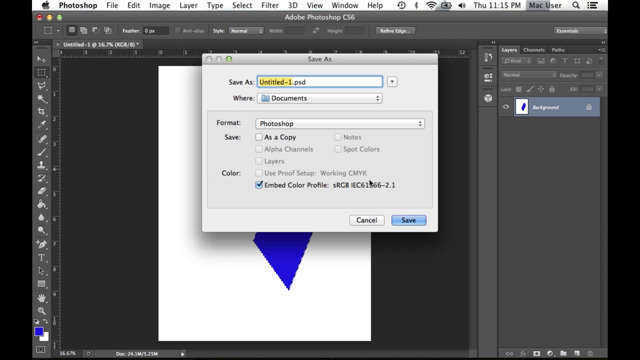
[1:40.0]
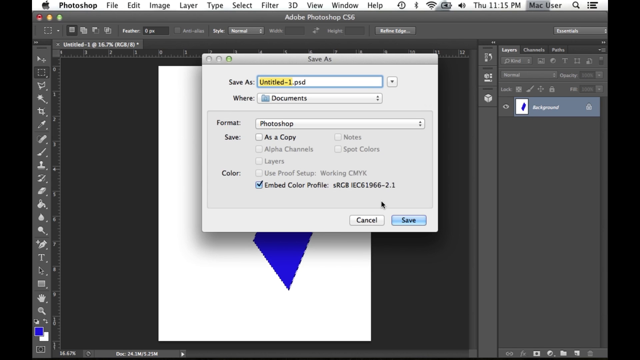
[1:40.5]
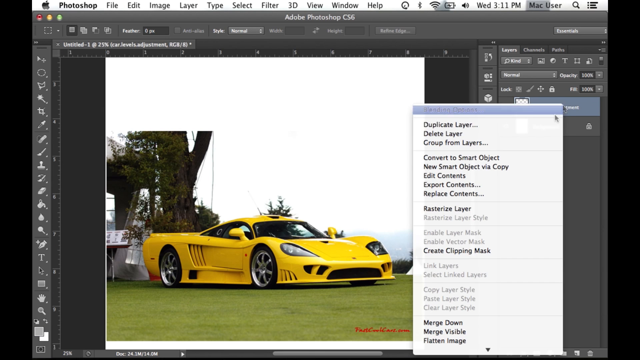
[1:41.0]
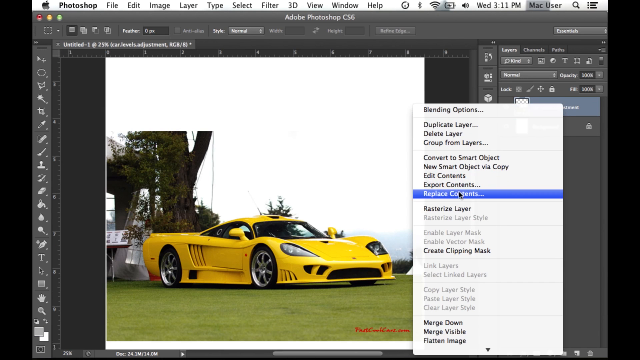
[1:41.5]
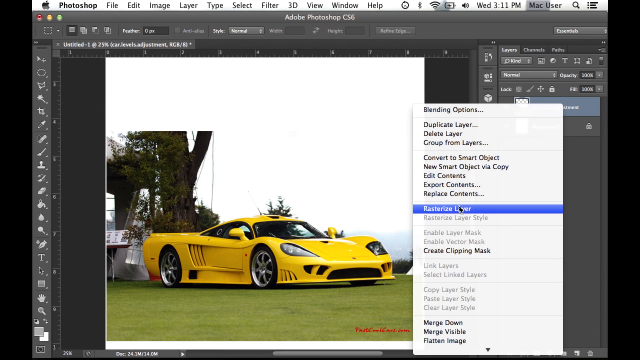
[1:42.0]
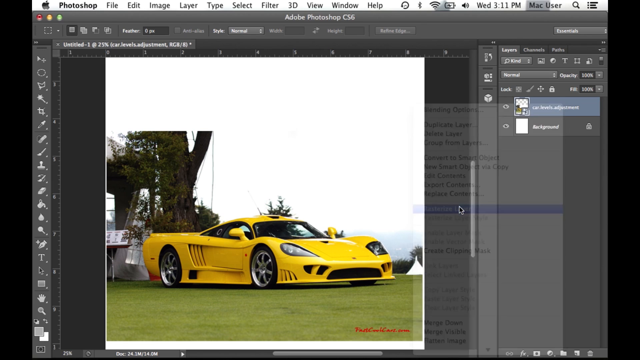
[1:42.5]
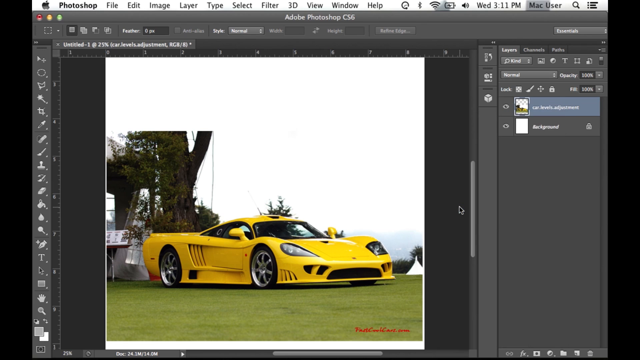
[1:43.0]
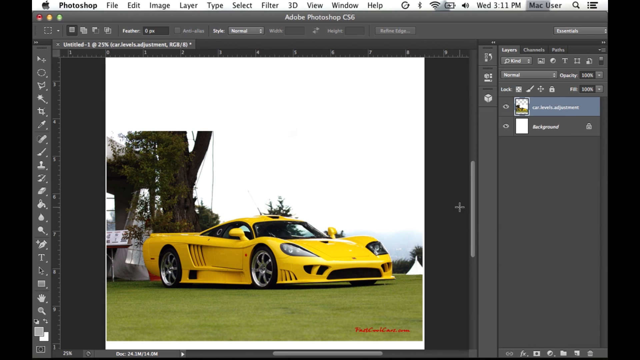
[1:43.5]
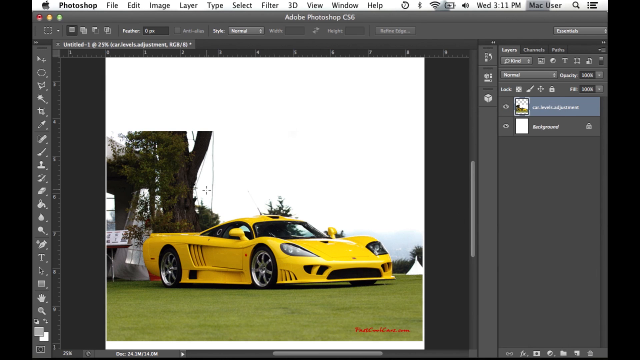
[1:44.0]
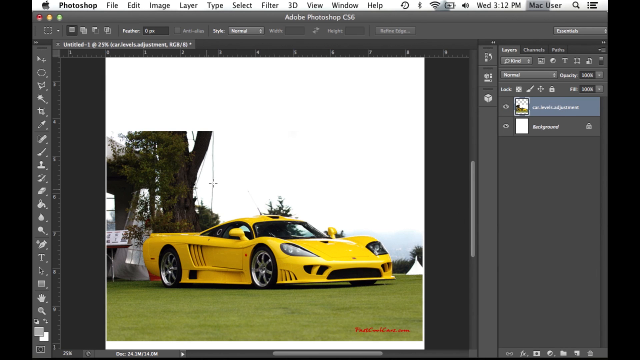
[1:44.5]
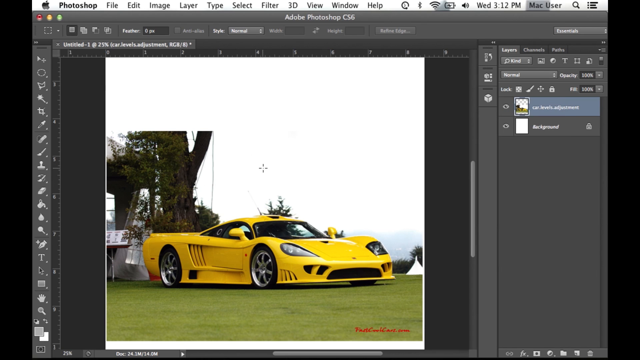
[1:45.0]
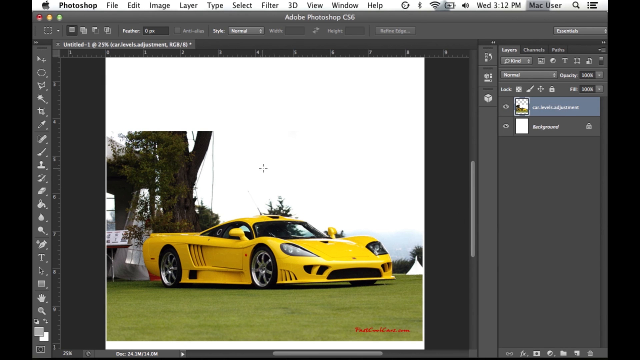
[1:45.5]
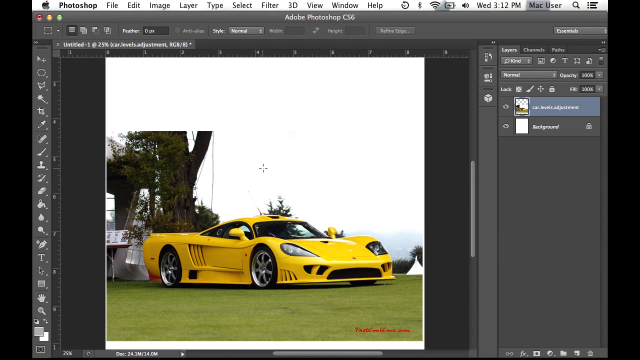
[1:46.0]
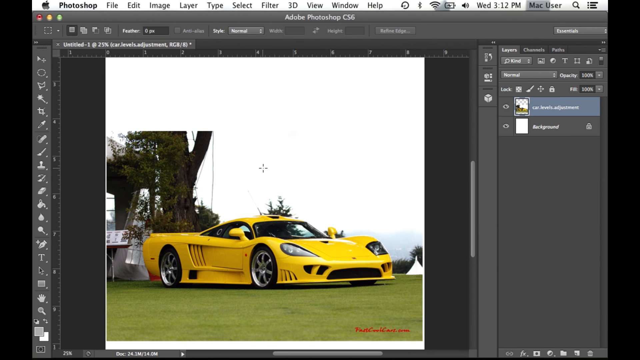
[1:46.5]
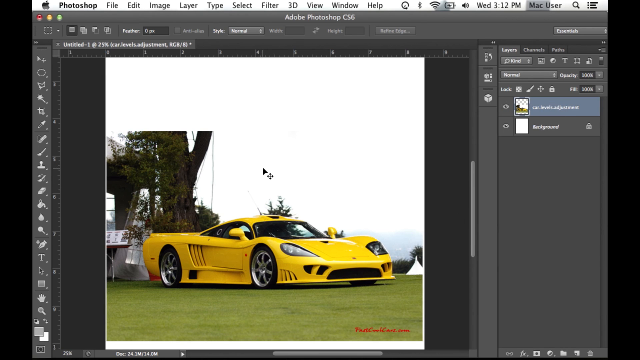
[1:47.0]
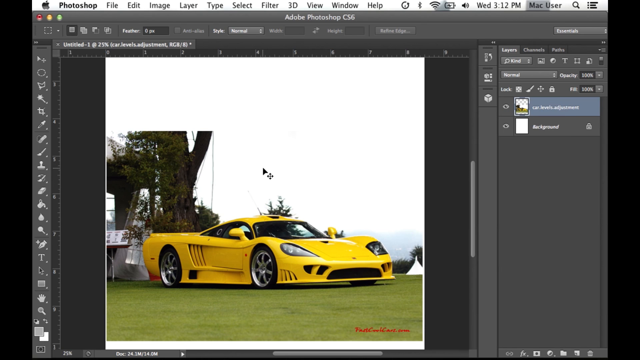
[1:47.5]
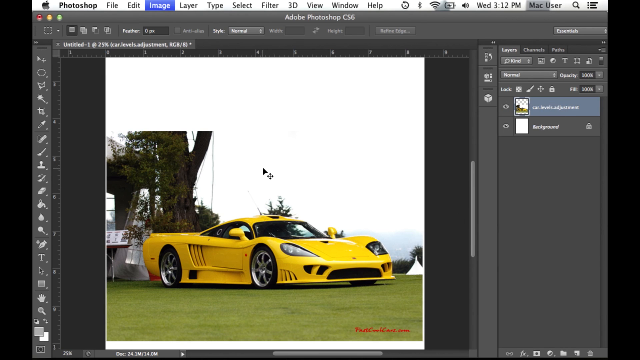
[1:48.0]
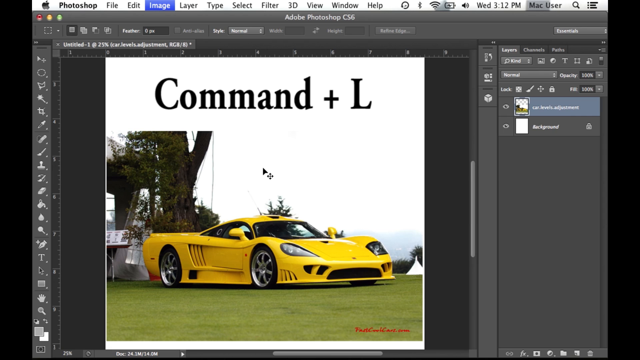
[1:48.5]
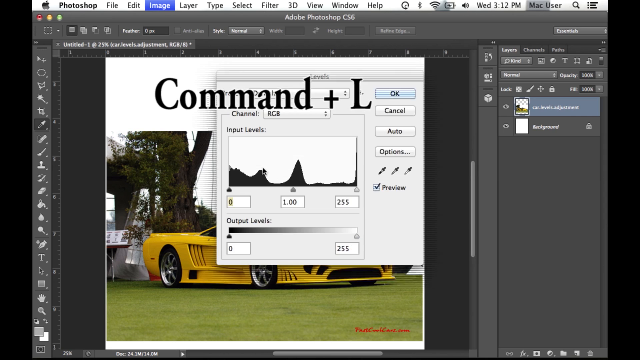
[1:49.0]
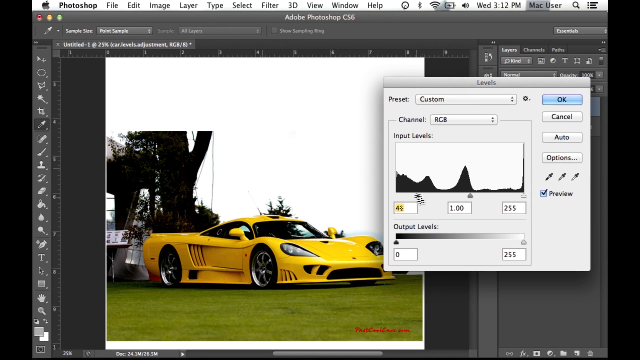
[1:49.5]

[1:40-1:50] The video is a little wider than it is tall, with black letterboxing about five percent in from each side. It shows Photoshop on a Mac desktop, identified by the Apple in the upper left, then "Photoshop", then the menu: file, edit, image, layer, type, select, filter, 3D, view, window and help. The tools run down the left-hand edge as usual. At the top it says "Adobe Photoshop CS6". The main work area shows what looks like a yellow Lamborghini facing somewhere around 4:30 or 5 o'clock, with its front right corner pointing toward the viewer. It is sitting in a grassy area with a tree just behind it on the left. A menu is open on the right, and advance layer is clicked. As this goes on, text comes over the top reading "command plus L".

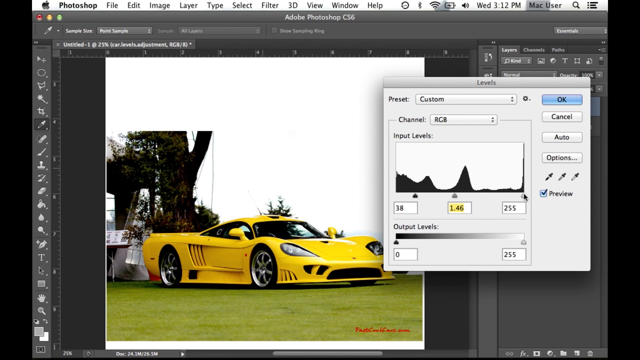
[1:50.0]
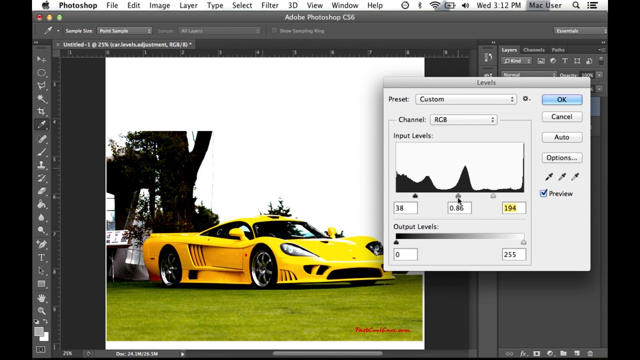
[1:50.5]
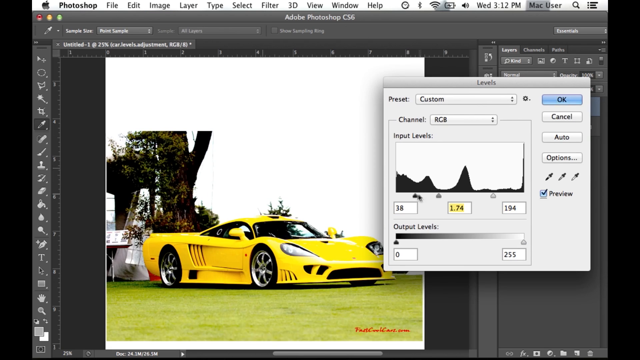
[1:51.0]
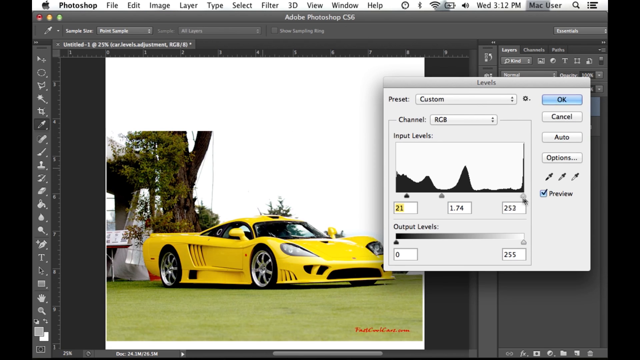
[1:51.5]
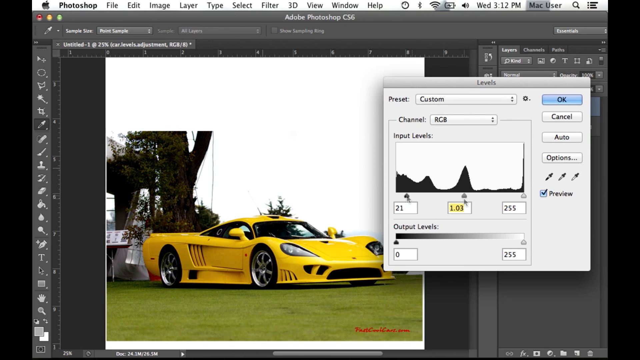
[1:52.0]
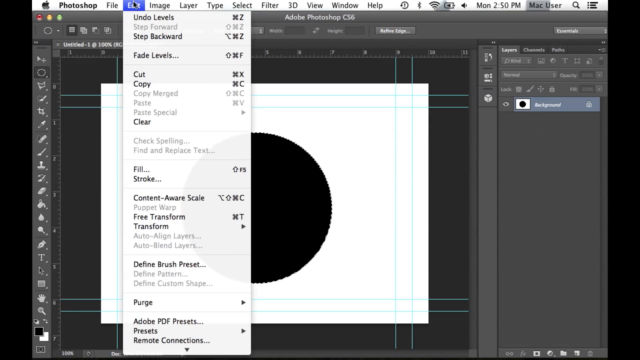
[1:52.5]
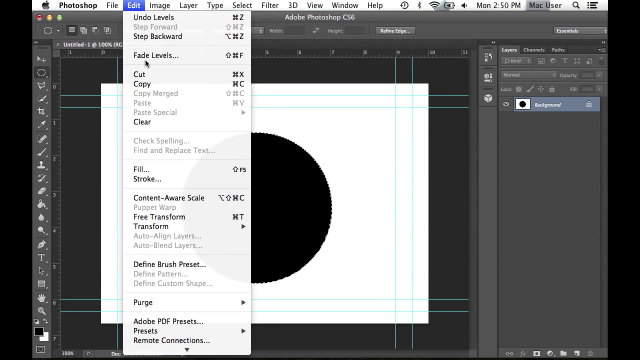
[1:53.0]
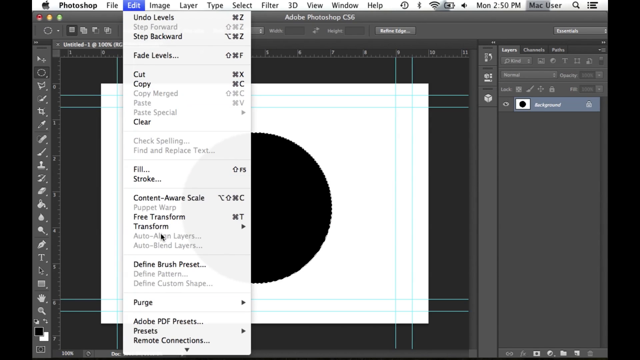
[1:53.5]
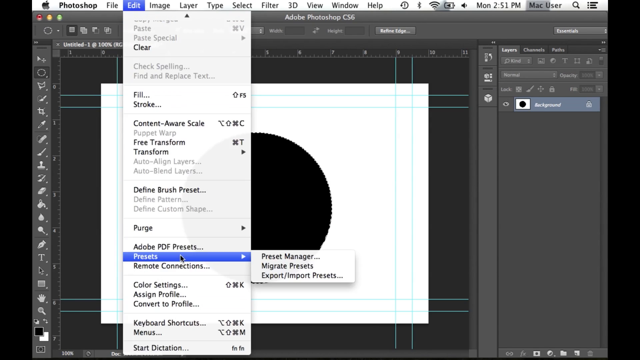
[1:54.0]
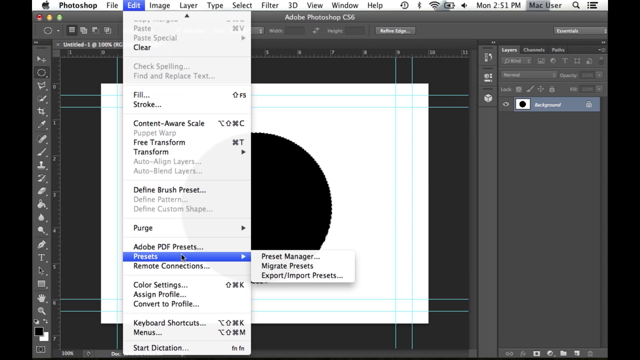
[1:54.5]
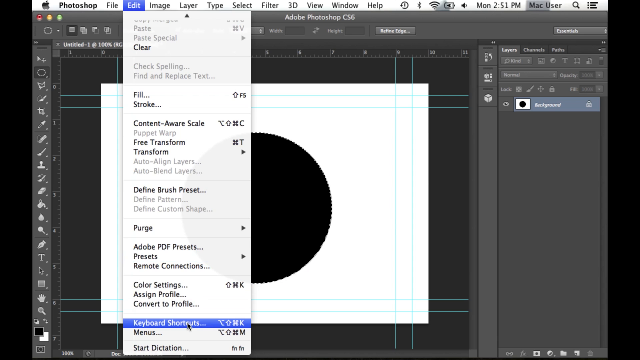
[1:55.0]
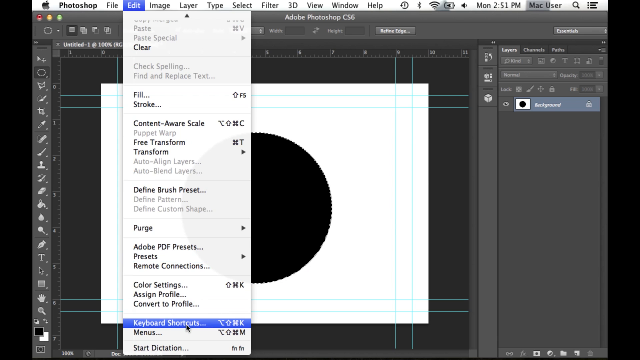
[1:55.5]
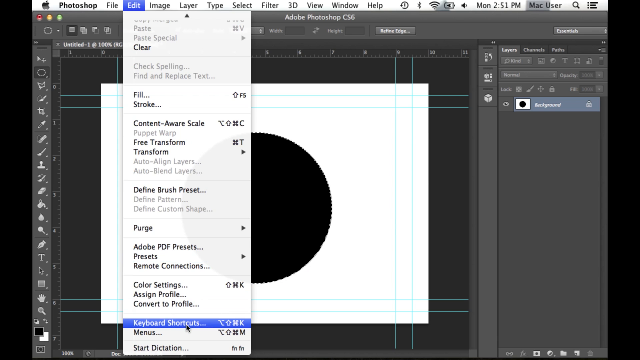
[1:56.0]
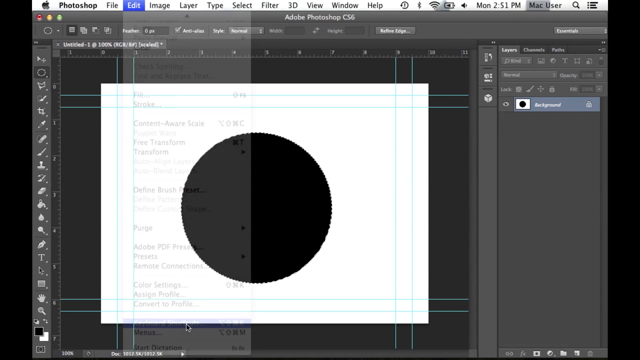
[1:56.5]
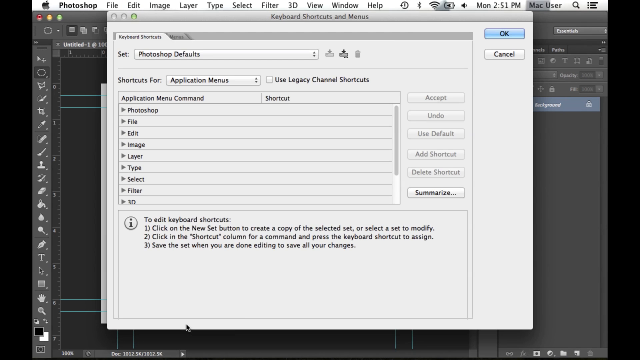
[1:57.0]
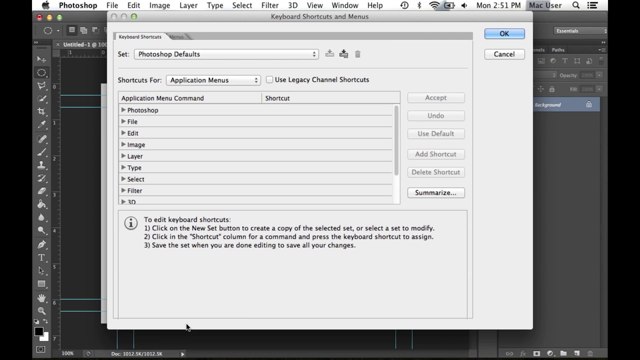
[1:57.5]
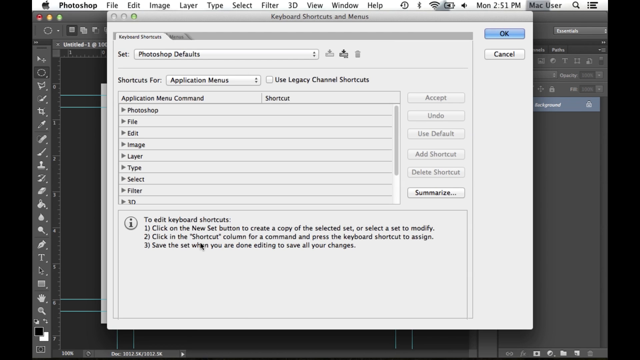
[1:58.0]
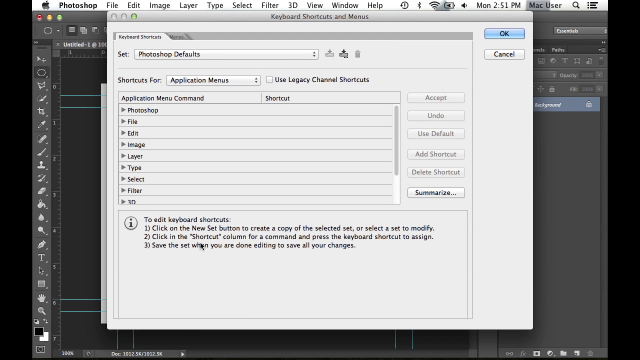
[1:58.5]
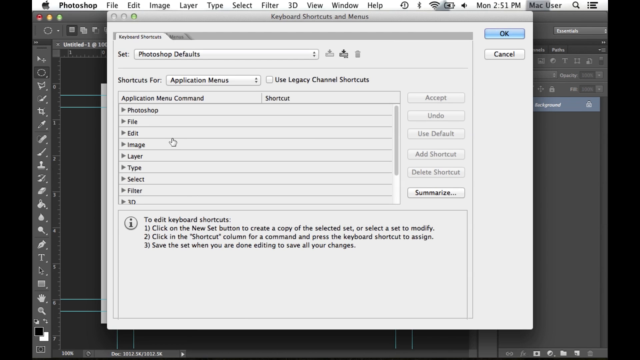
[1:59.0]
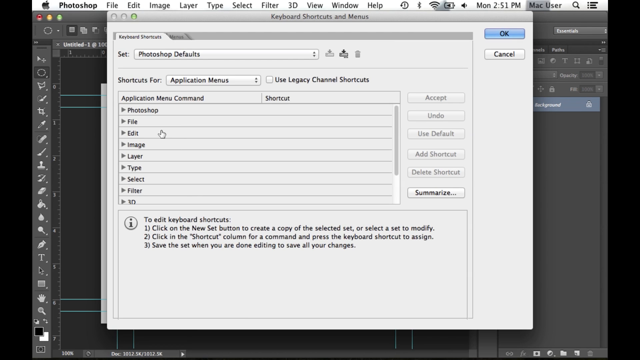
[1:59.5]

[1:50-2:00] The video is a little wider than it is tall, letterboxed about 5% in from each side on the left and right, and shows someone's macOS desktop with Photoshop running. In the upper left are an Apple icon and "Photoshop", followed by the menu options File, Edit, Image, Layer, Type, Select, Filter, 3D, View, Window and Help. The main work area shows a picture of a Lamborghini facing the lower right-hand corner, seen from its front right corner, sitting in some grass with a tree behind it. On the right, an open menu labeled "Levels" at the top contains a graph filled in with black.